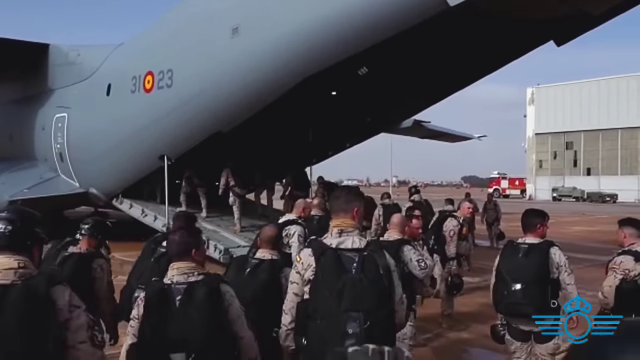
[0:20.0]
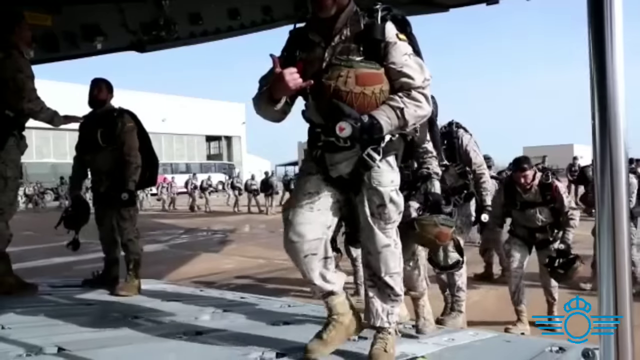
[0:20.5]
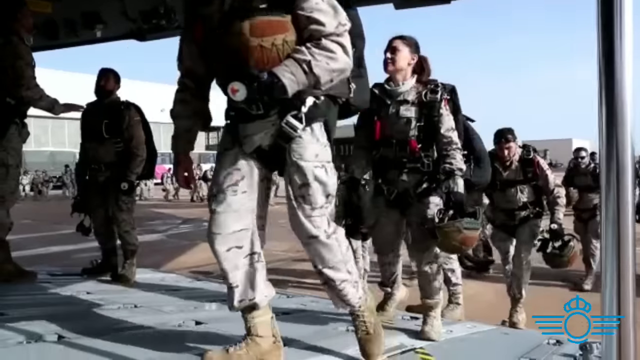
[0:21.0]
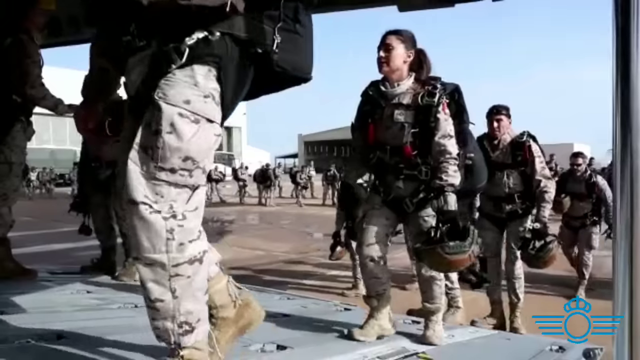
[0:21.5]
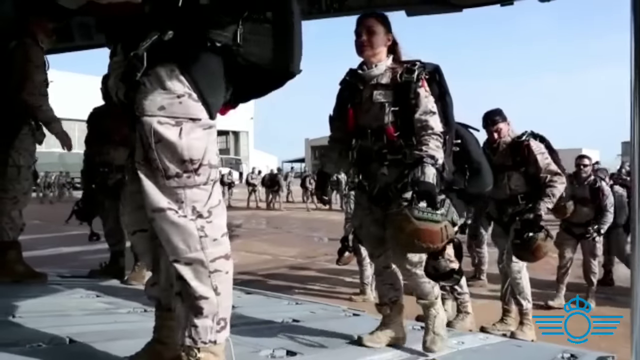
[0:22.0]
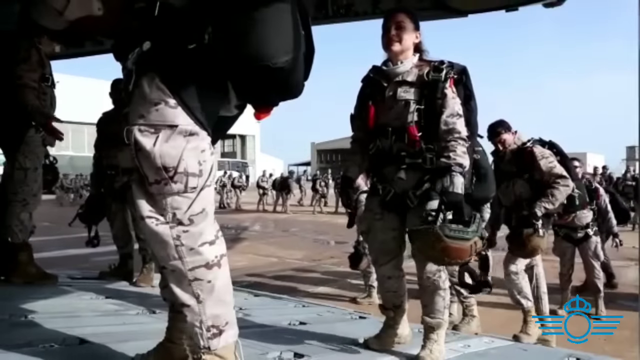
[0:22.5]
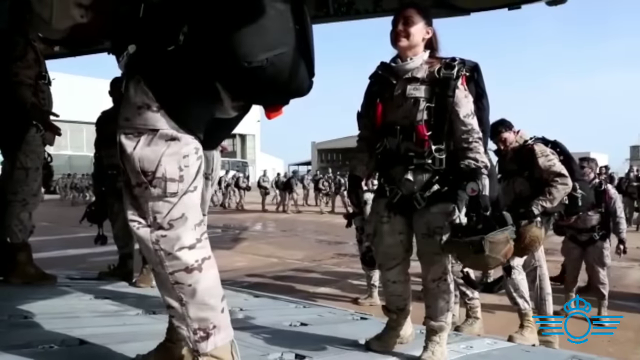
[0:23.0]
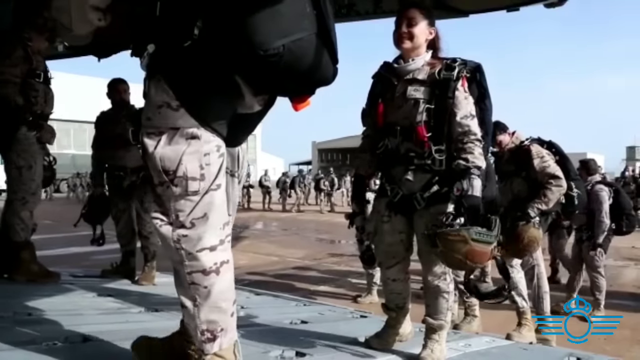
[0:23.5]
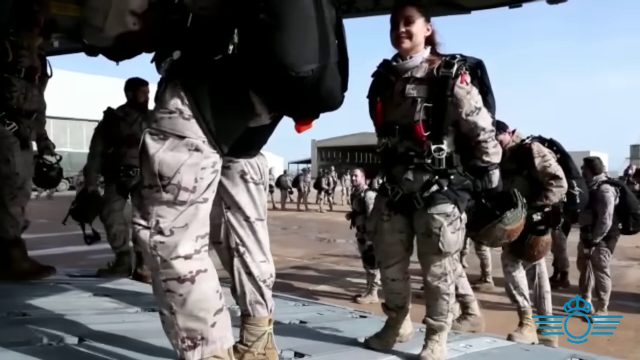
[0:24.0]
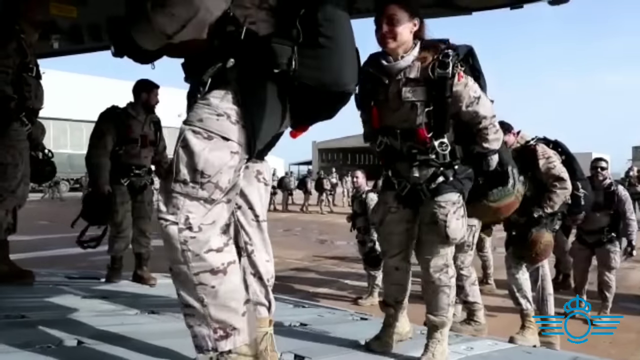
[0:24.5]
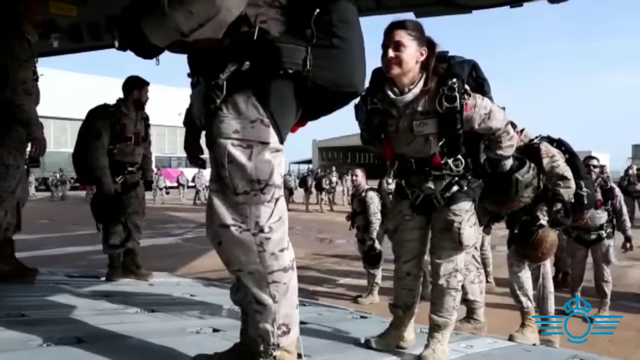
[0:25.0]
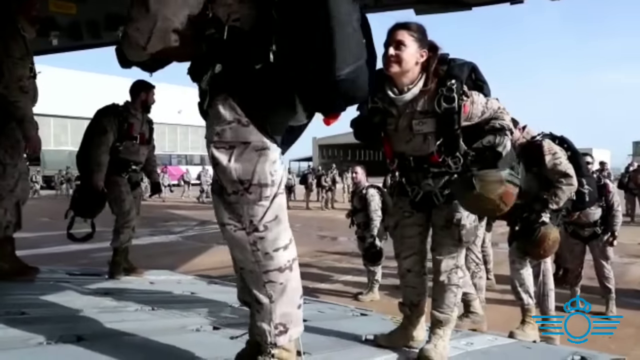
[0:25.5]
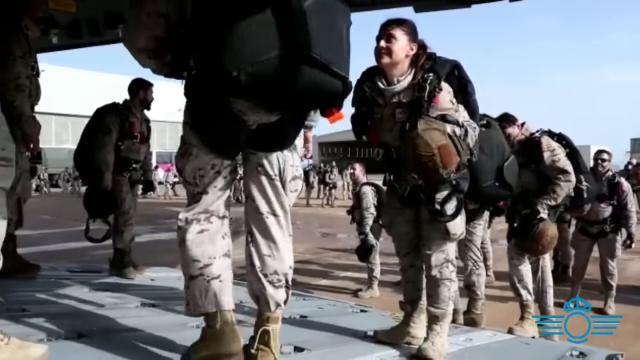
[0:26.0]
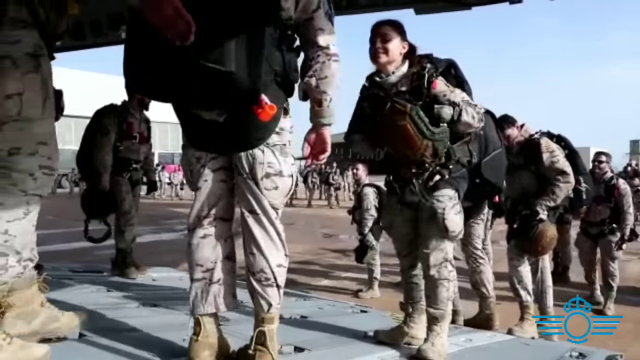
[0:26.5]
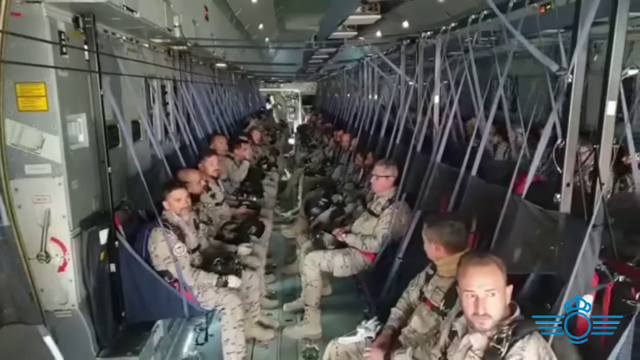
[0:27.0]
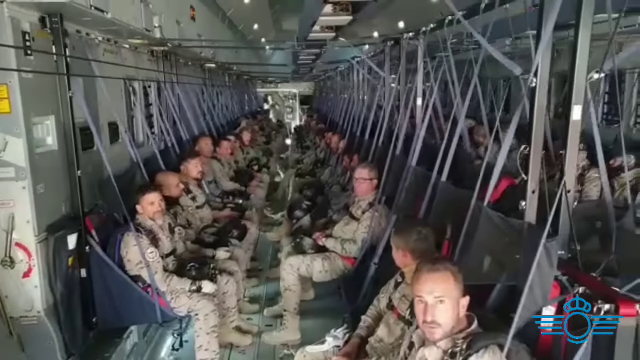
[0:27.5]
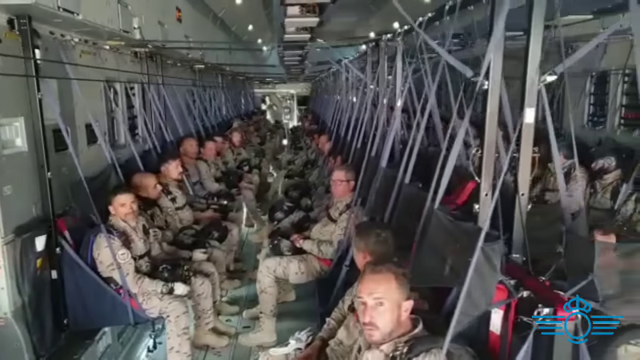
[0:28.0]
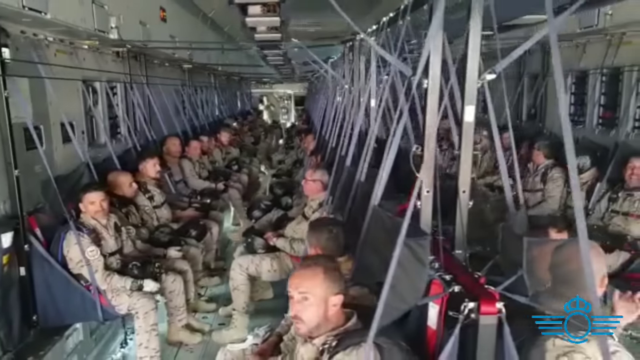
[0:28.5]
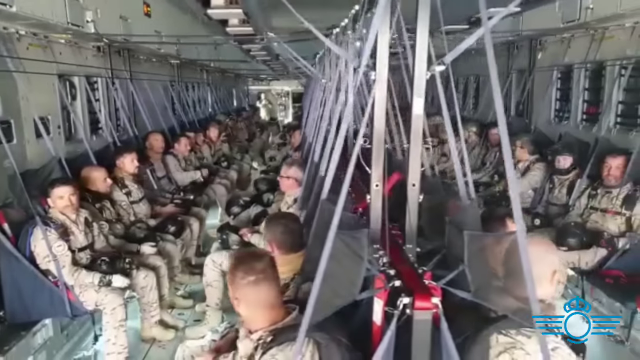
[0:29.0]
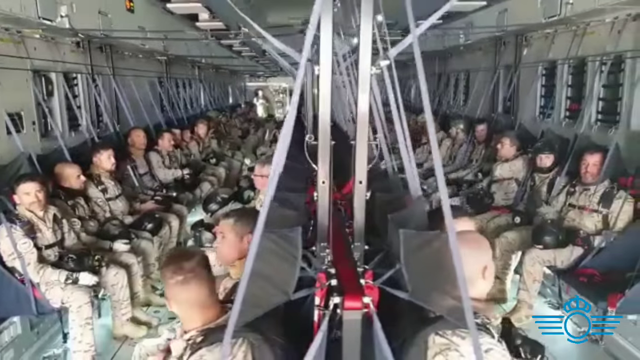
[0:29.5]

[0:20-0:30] The service people walk up on a platform, getting ready to board the plane. It looks like a service aircraft, as the inside of the plane does not look like a traditional passenger airplane. Many different service people, both men and women, board the plane. The aircraft is large and gray, with some numbers on its side. The servicemen appear to be talking to each other as they board. It looks like a clear day with just a few clouds, and a building and what appears to be a fire engine are in the background.